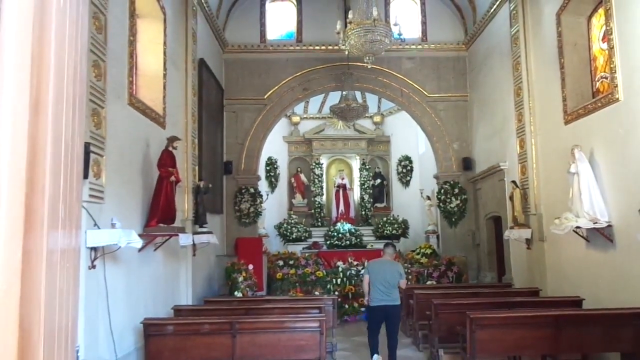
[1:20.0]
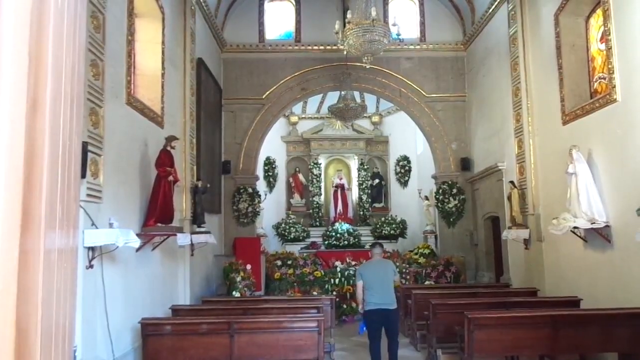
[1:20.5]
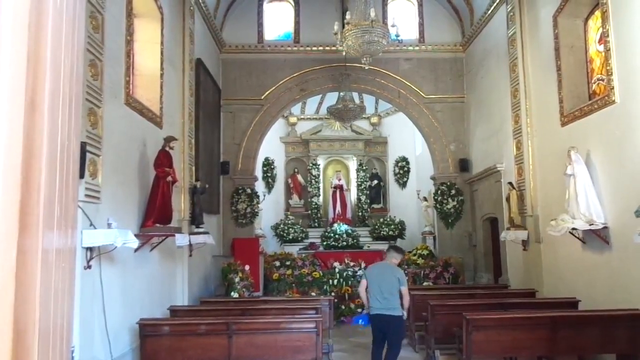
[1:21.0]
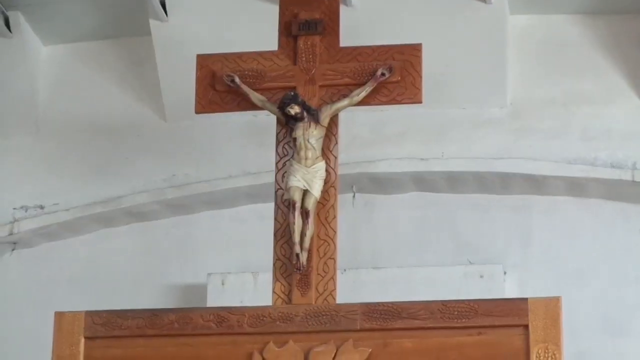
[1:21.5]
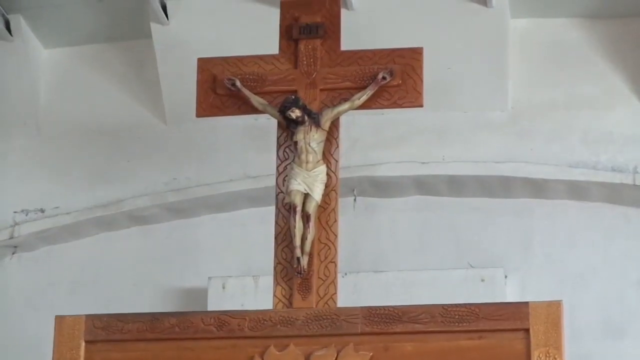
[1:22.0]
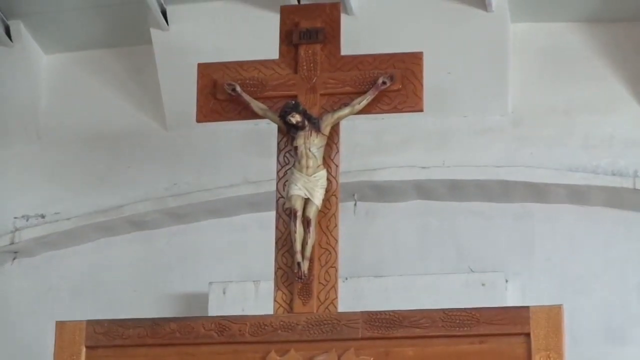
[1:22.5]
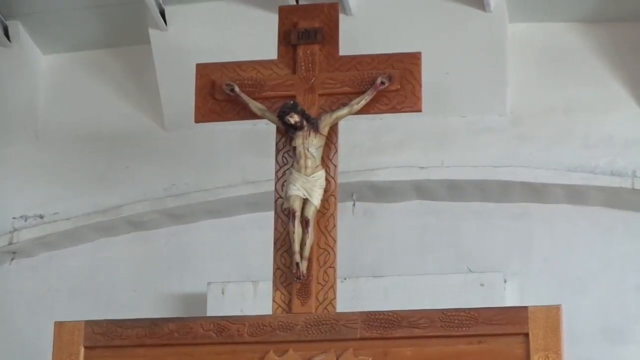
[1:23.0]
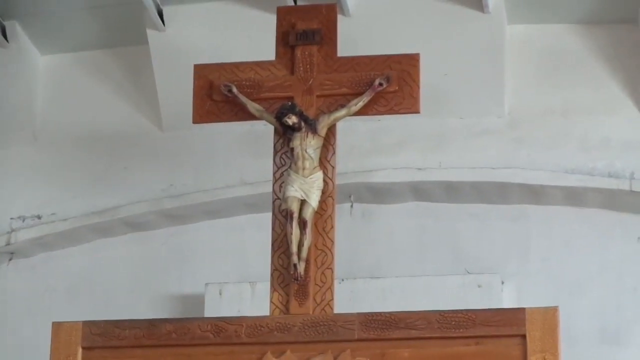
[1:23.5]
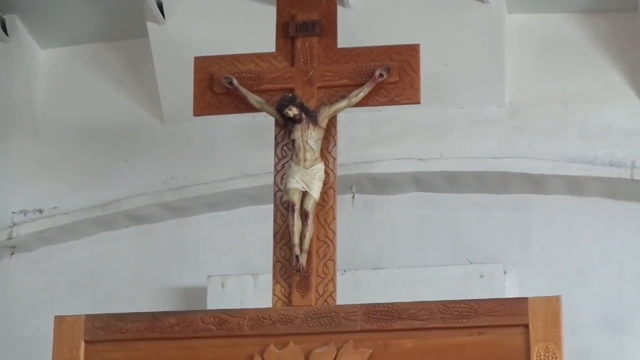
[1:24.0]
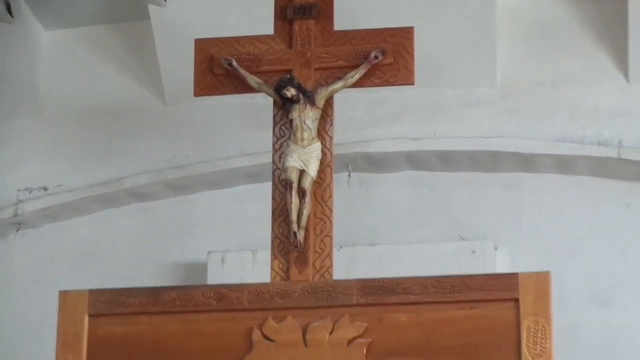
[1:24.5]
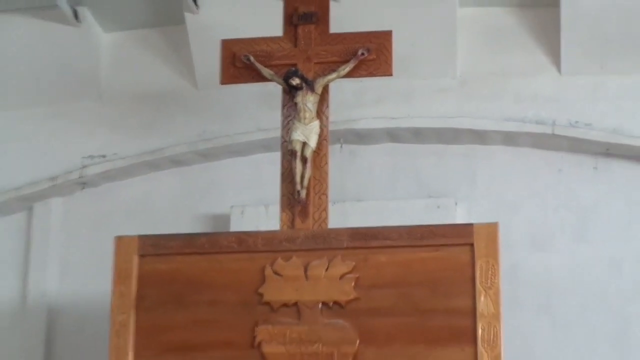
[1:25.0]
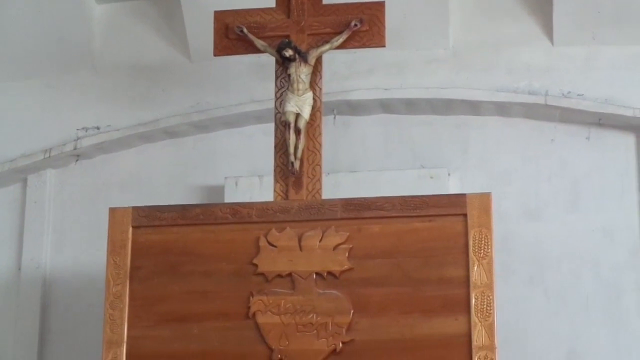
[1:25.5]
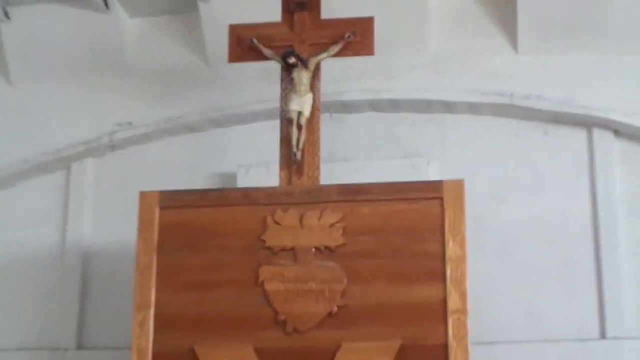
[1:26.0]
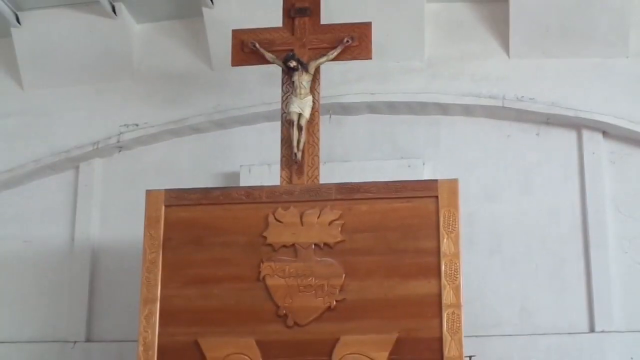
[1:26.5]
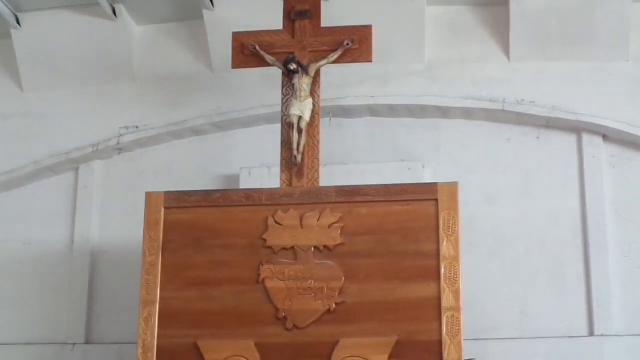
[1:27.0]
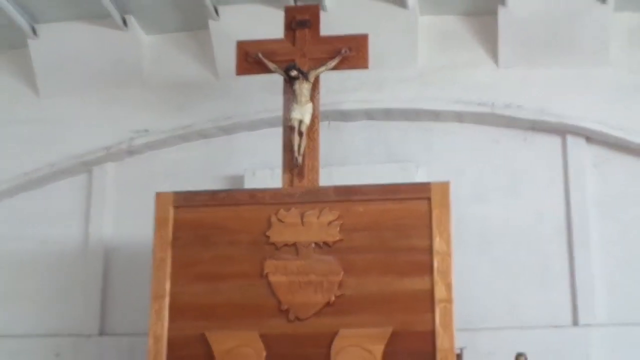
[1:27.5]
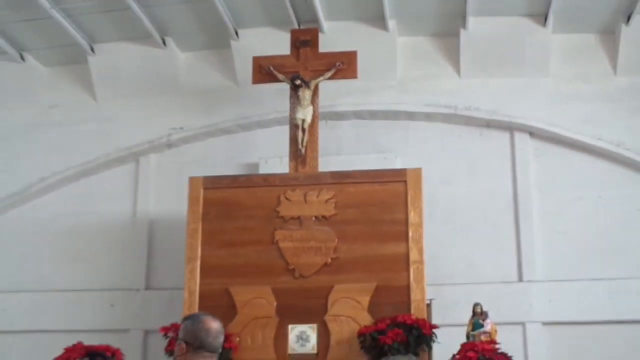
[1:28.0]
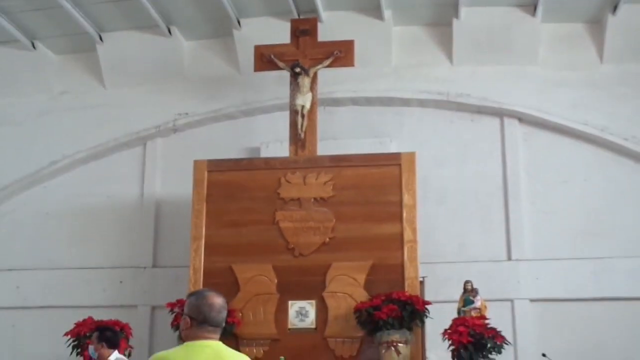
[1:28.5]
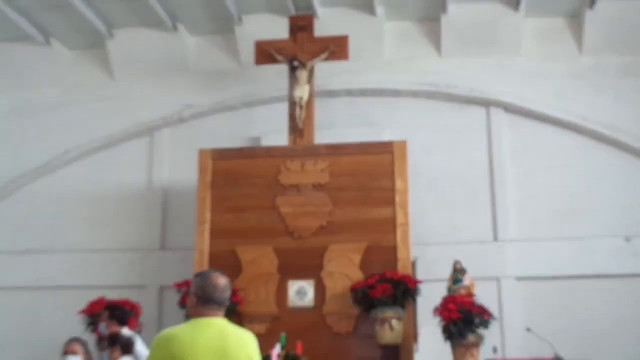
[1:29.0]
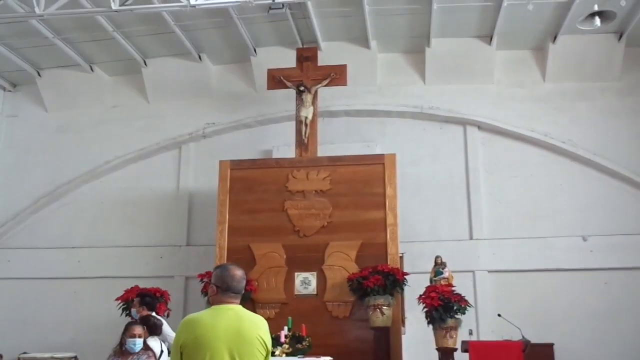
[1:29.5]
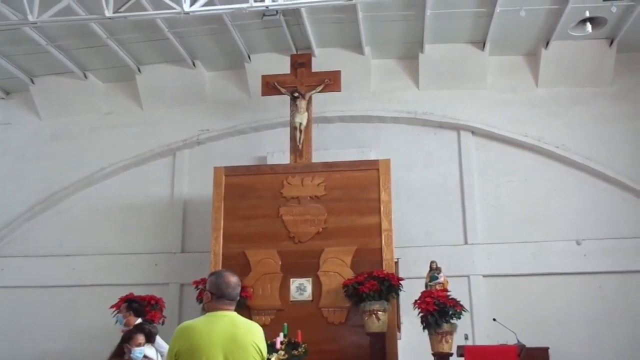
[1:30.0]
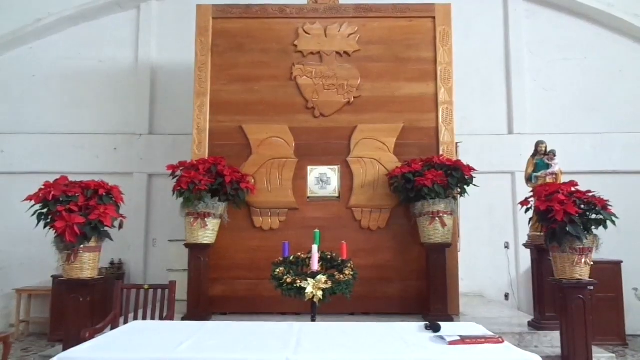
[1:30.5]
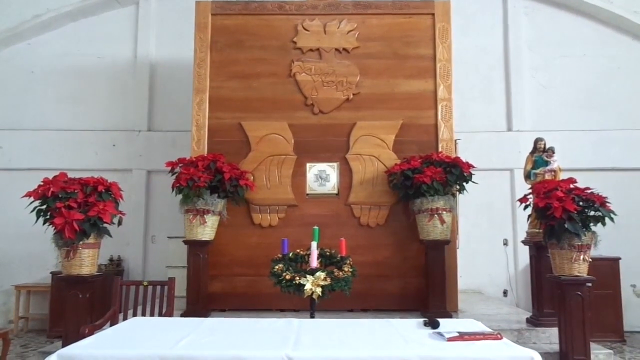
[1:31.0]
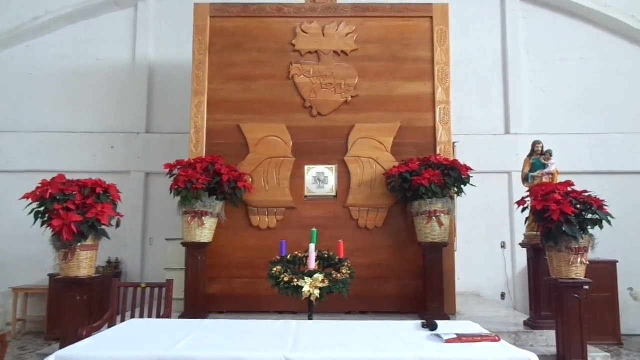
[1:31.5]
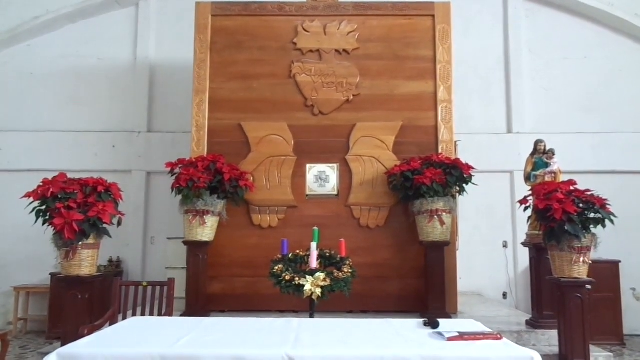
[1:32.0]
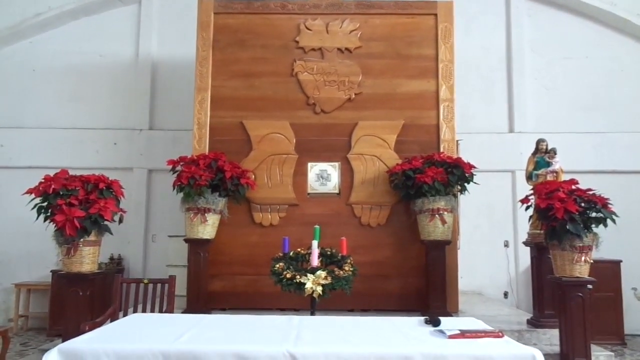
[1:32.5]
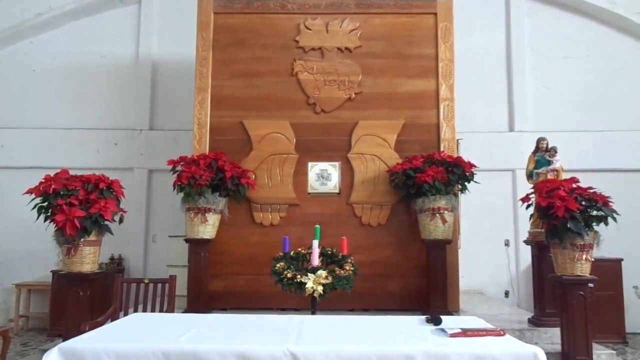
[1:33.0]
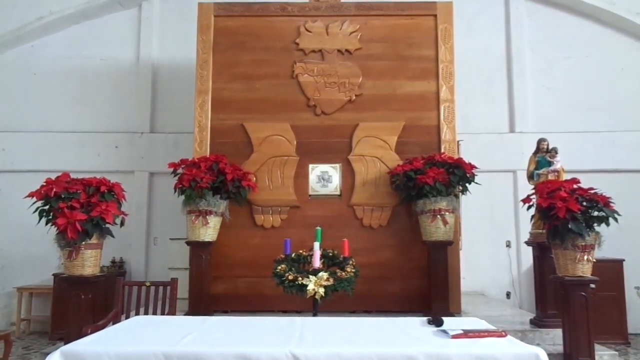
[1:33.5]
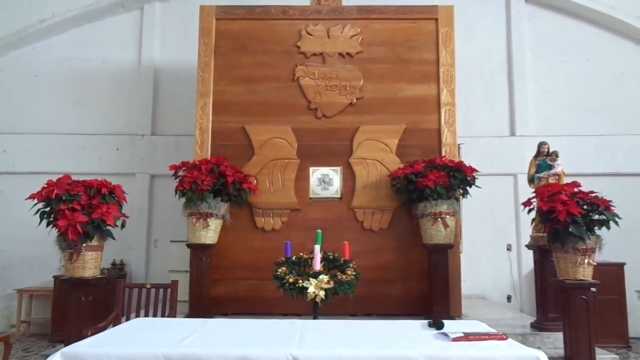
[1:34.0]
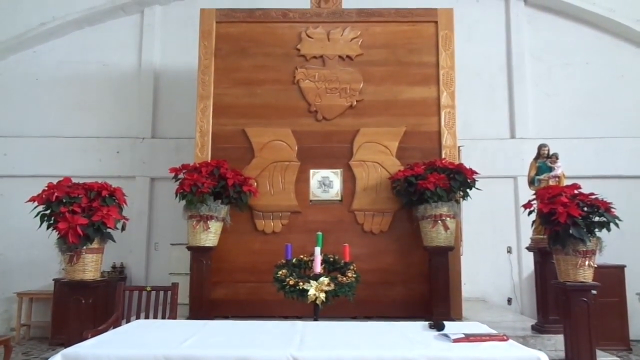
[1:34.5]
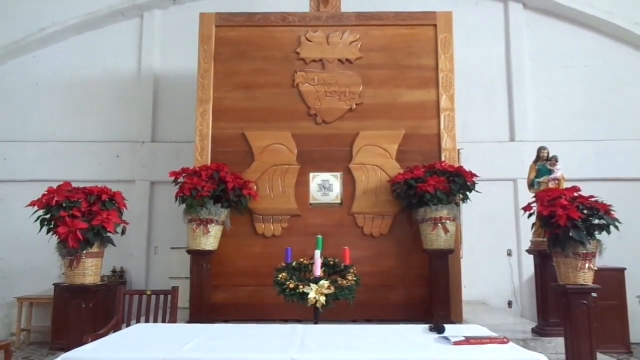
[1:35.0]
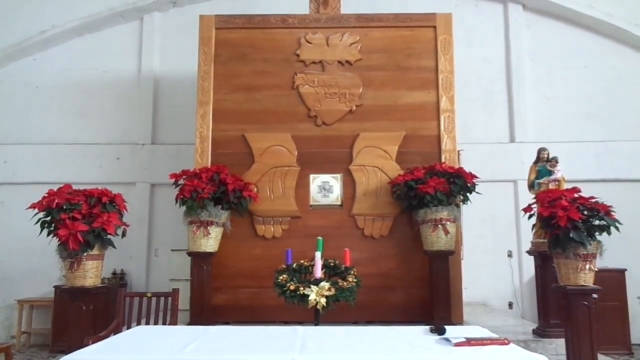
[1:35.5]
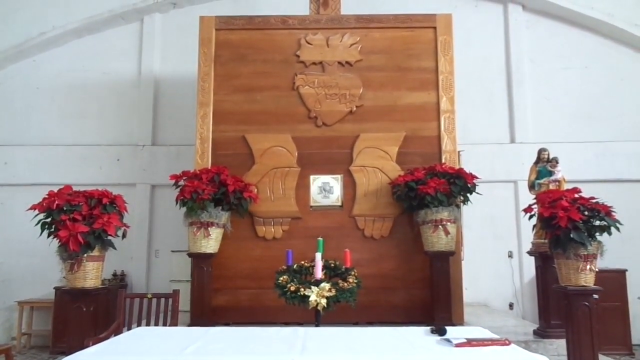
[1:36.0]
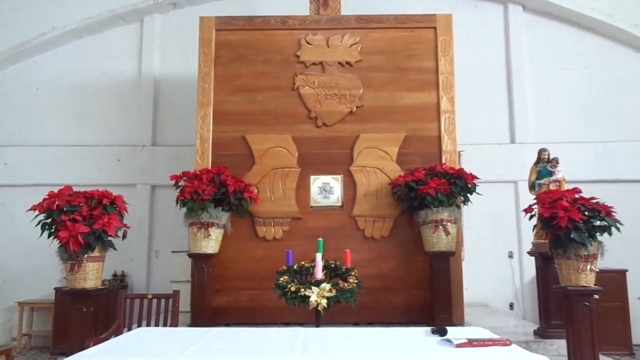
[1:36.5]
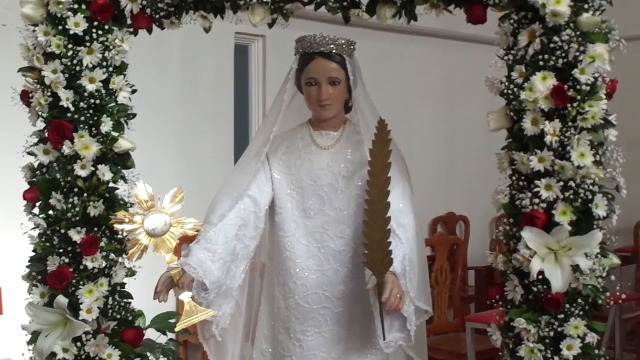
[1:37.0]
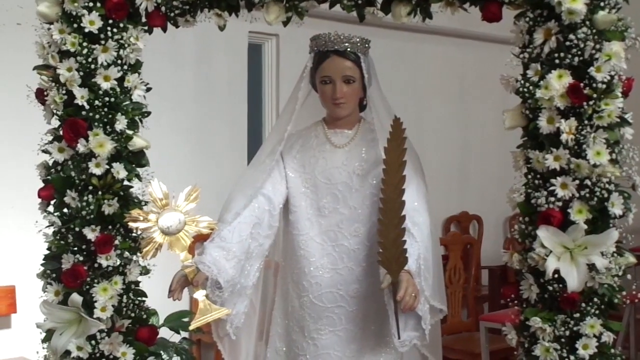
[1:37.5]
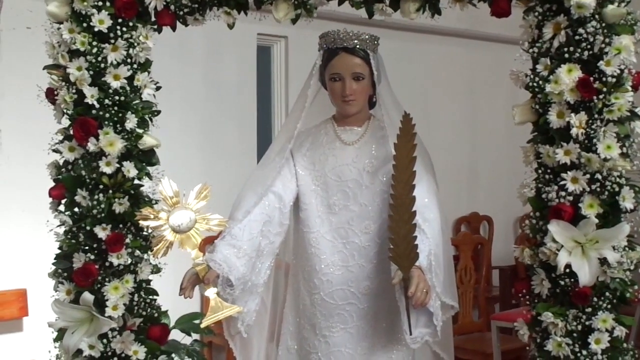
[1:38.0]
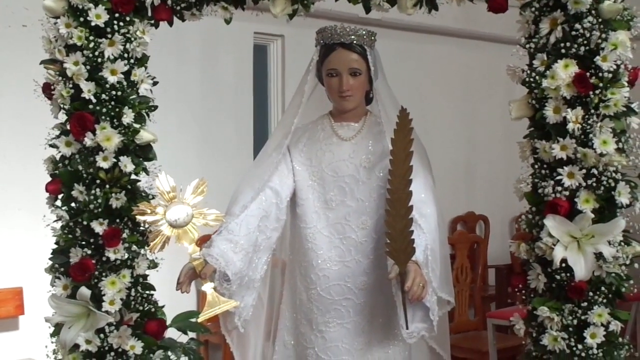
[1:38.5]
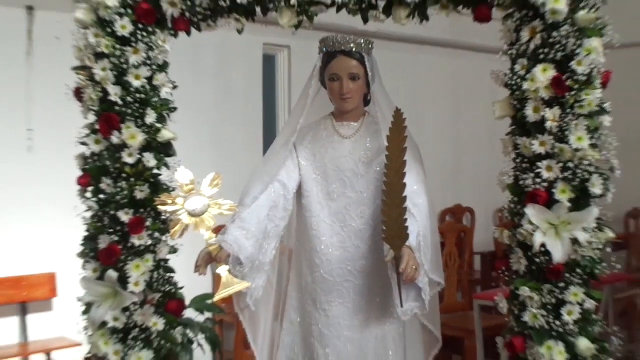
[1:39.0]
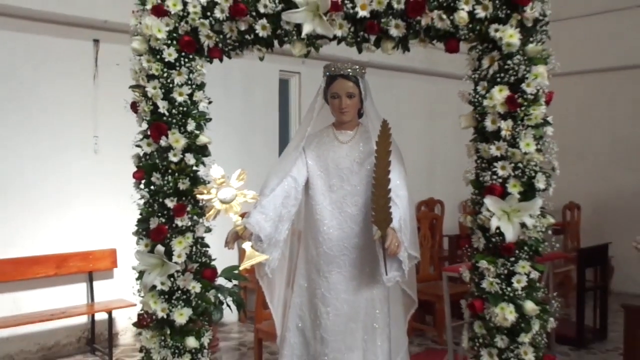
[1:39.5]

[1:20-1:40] In a small church, a small altar at the end has three religious characters as statues on the back wall. All around the altar are big displays of flowers and leaves placed around the floor on the altar, and there are wreaths on the walls. Little ornaments are on the small shelves. A man in a grey t-shirt walks backwards from the altar, crossing his head, chest and shoulders. Then there is a close-up of a brown wooden cross with Jesus, in something like a loincloth, hanging from it by his hands; he has long hair and a beard. The camera pans back down to show a little more of the cross Jesus is on. Underneath is a big wooden area with kind of wooden hands and pots of flowers.